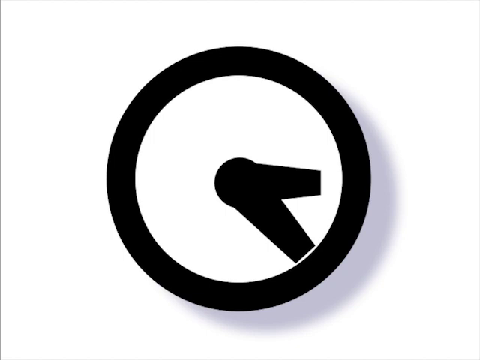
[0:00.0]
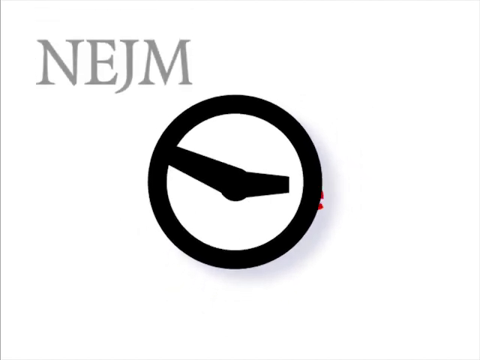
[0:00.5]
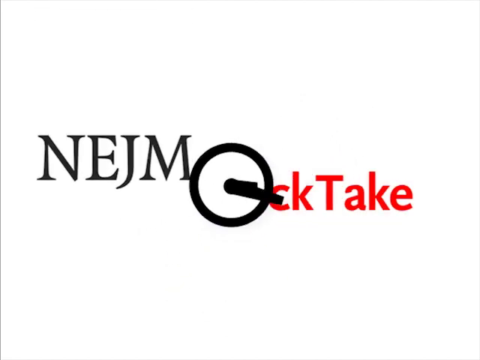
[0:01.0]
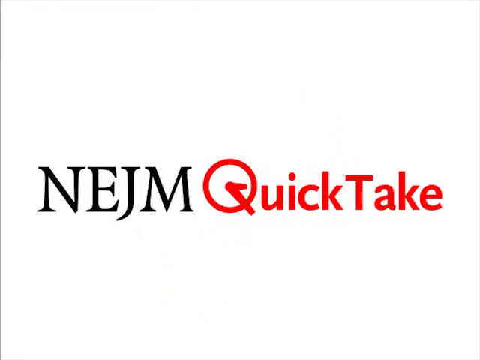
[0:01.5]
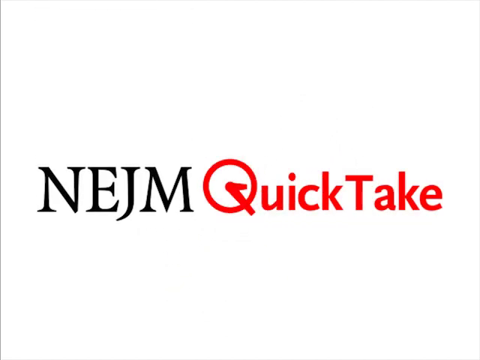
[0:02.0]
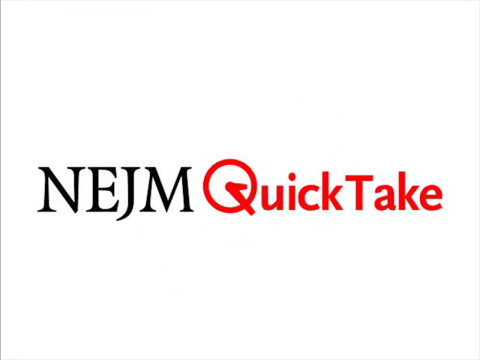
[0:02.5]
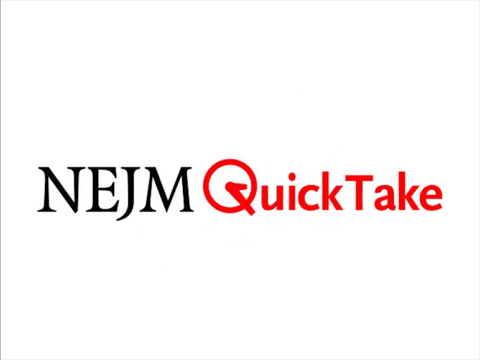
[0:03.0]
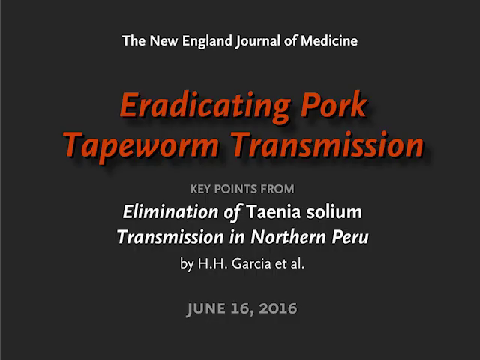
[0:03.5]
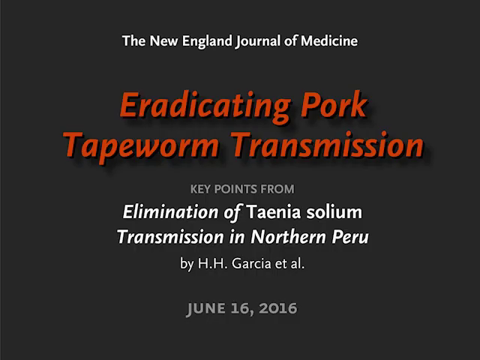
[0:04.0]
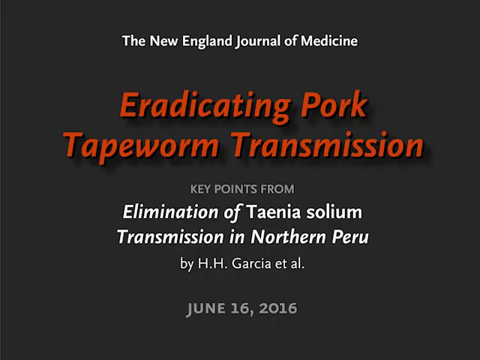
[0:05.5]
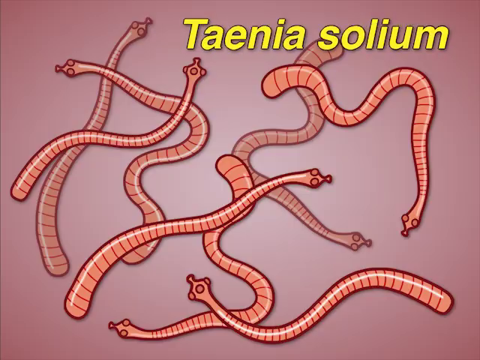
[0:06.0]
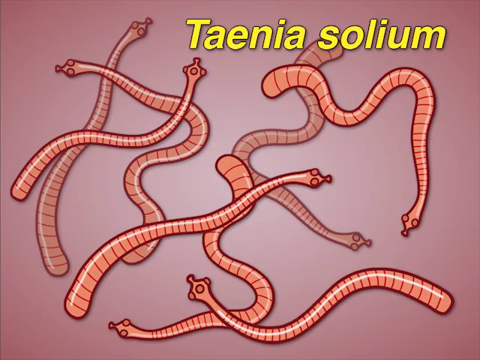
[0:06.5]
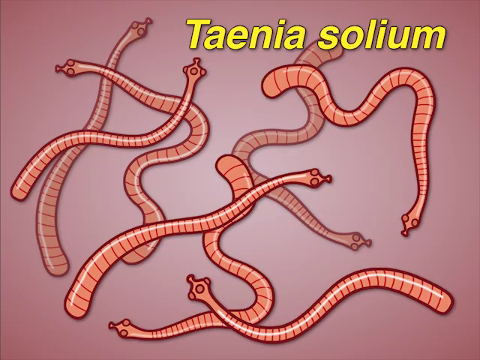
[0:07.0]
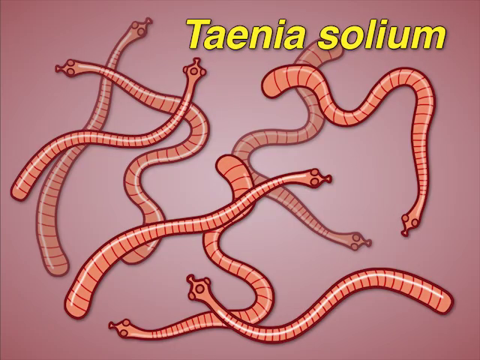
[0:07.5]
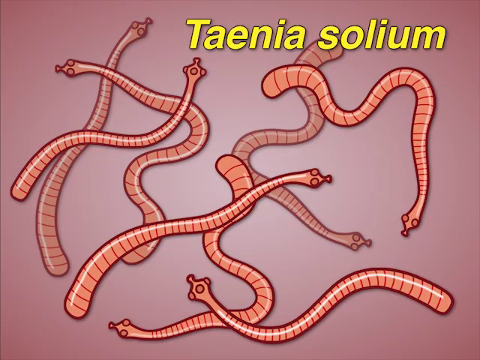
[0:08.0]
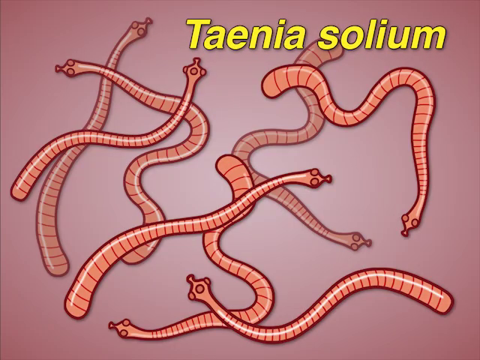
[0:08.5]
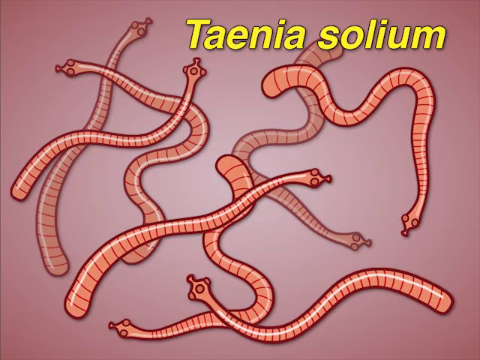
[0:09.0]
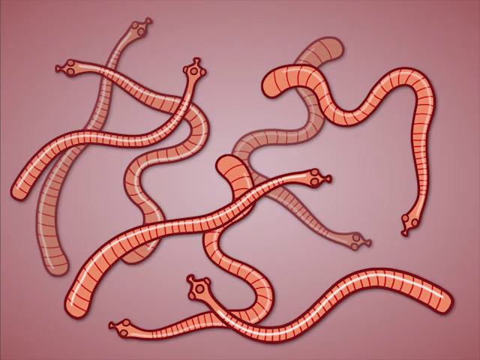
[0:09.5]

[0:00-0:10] An animated clock with its big hand ticking around turns into the letter Q. On a white background, the screen reads "NEJM quick take", with "NEJM" in black letters and "quick take" in coral red. The next screen has a grey background and reads, in white letters, "the New England Journal of Medicine" and "eradicating pork tapeworm transmission", followed by "Key points from elimination of Taenia solium transmission in northern Peru by HH Garcia et al." and the date "June 16th, 2016". Most of the writing is white or grey, but "eradicating pork tapeworm transmission" is orange. The following screen has a pink background with nine cartoon tapeworms, and at the top, in yellow lettering, it reads "Taenia solium".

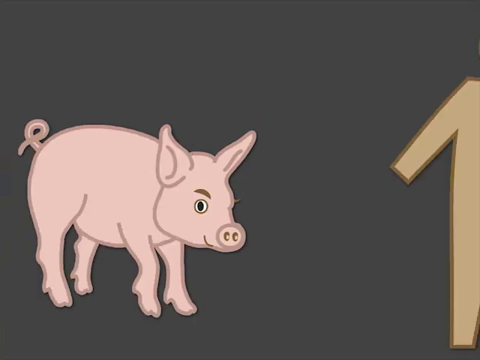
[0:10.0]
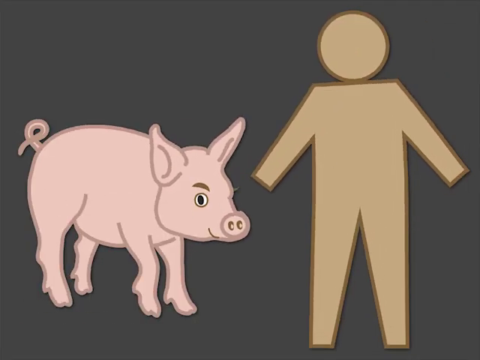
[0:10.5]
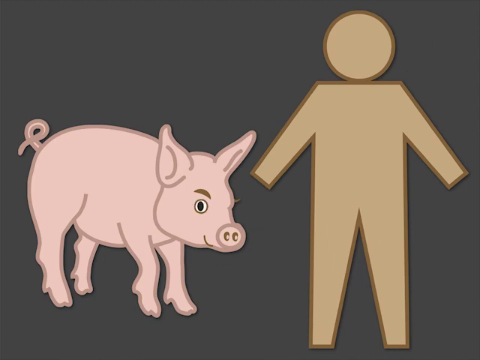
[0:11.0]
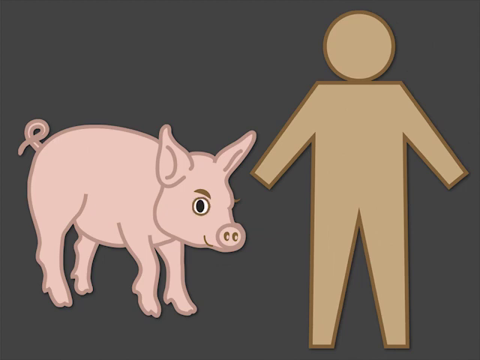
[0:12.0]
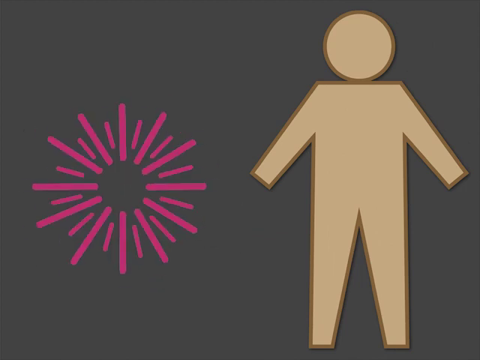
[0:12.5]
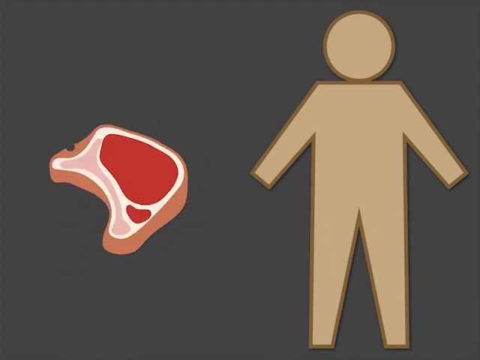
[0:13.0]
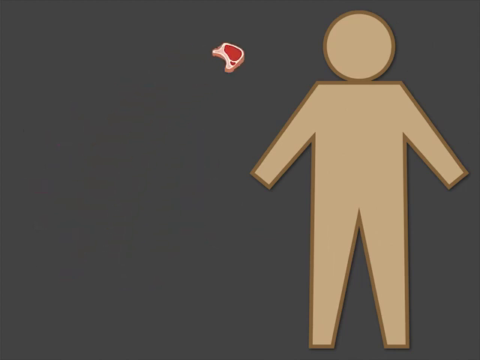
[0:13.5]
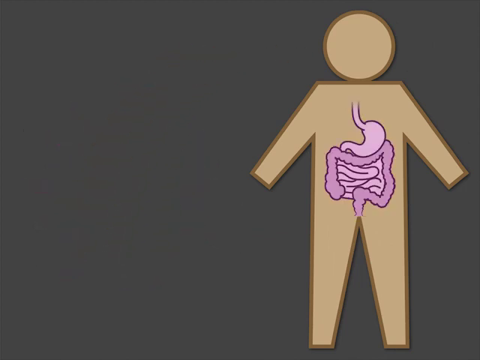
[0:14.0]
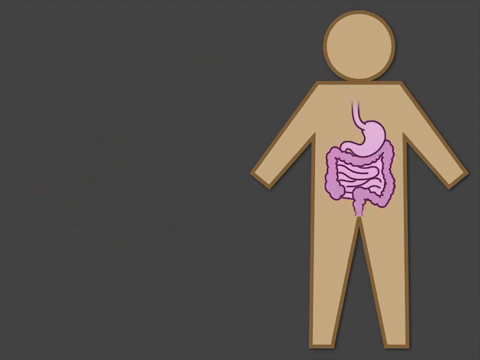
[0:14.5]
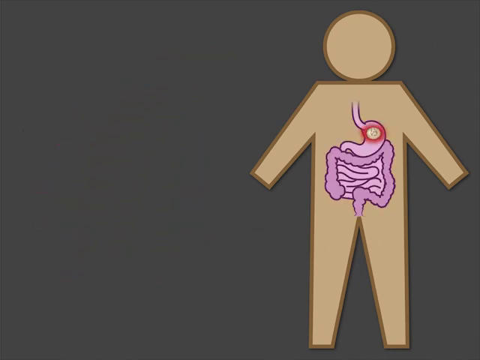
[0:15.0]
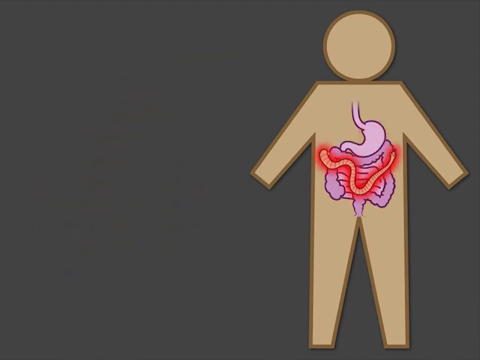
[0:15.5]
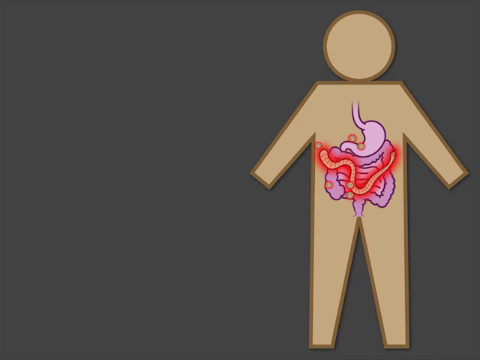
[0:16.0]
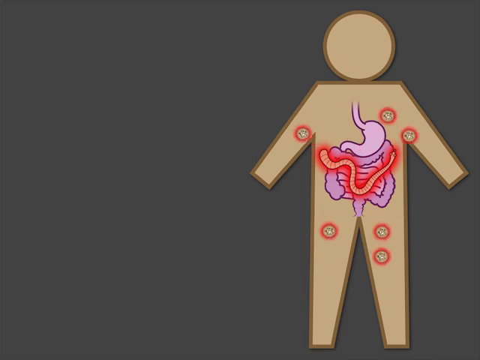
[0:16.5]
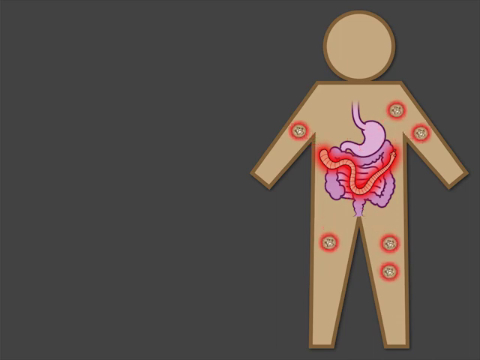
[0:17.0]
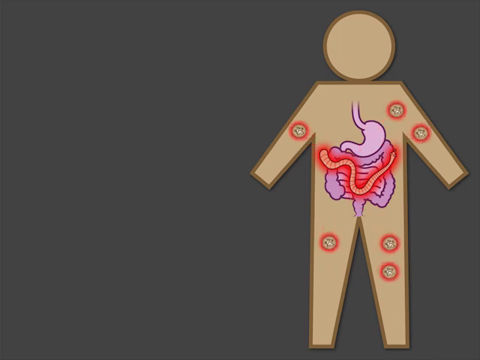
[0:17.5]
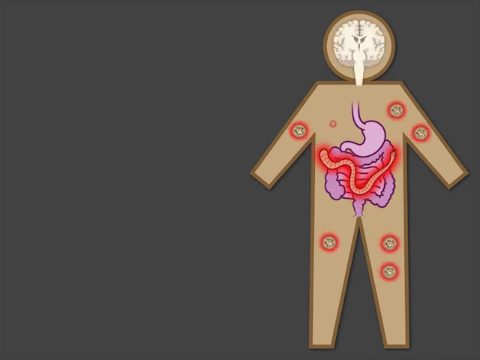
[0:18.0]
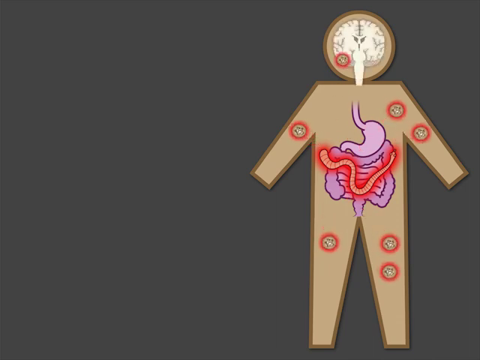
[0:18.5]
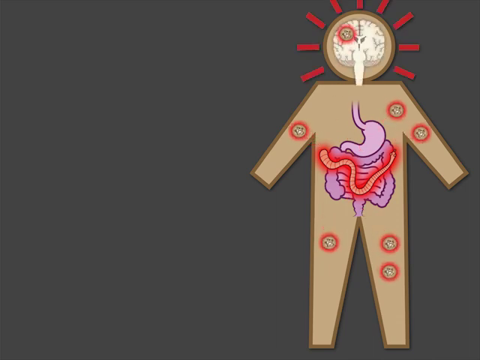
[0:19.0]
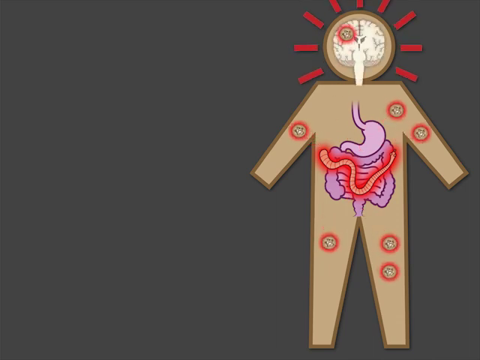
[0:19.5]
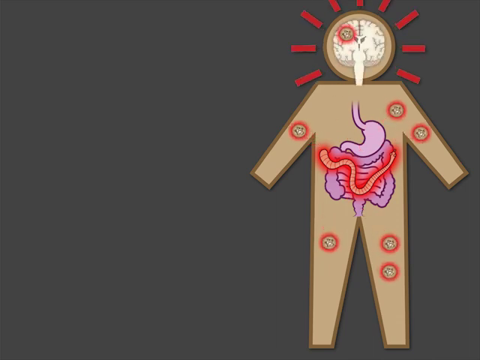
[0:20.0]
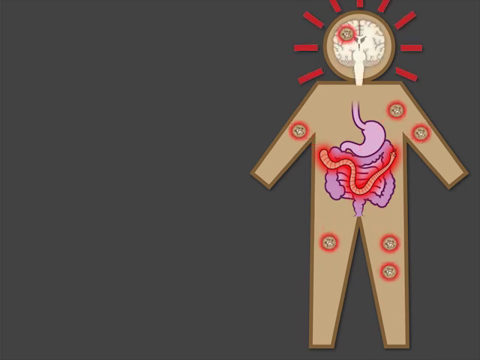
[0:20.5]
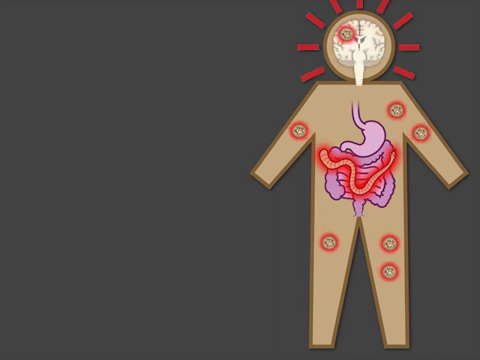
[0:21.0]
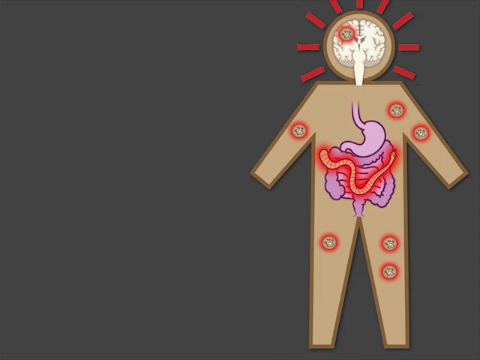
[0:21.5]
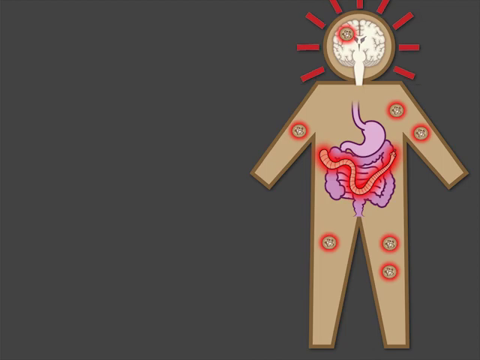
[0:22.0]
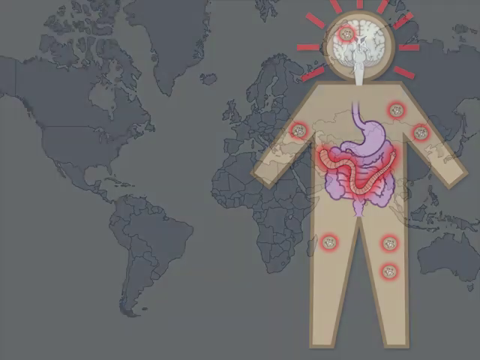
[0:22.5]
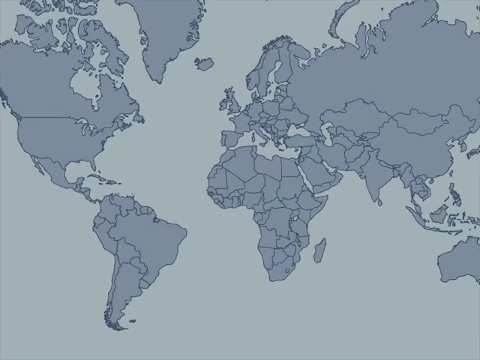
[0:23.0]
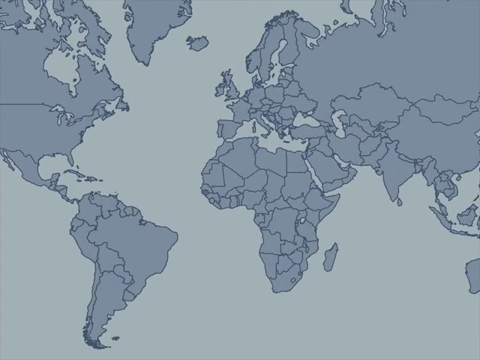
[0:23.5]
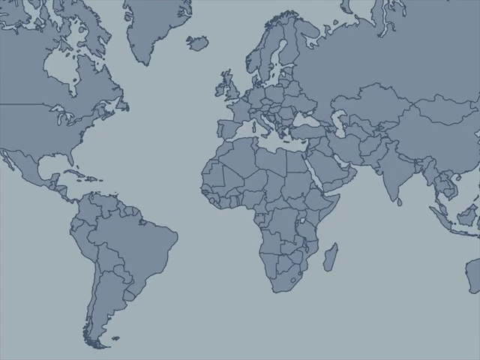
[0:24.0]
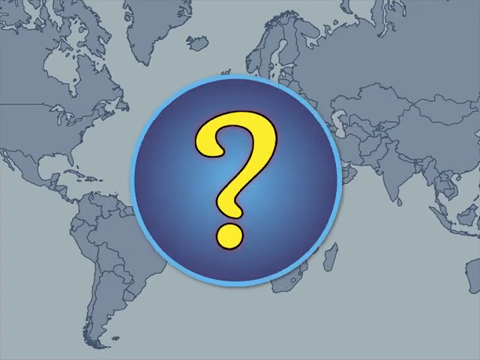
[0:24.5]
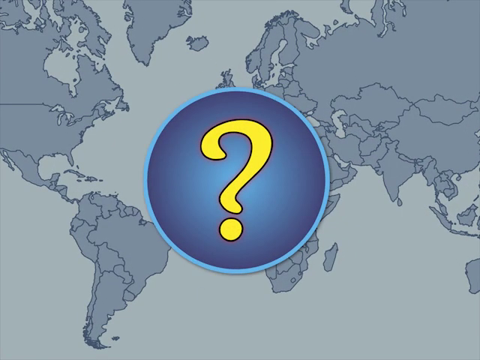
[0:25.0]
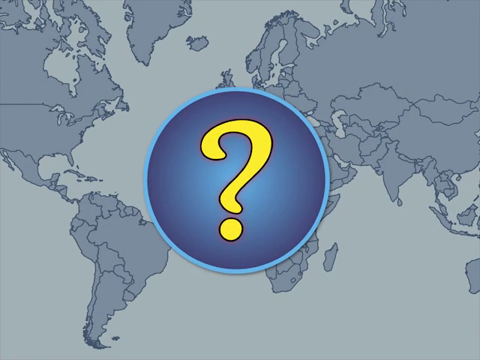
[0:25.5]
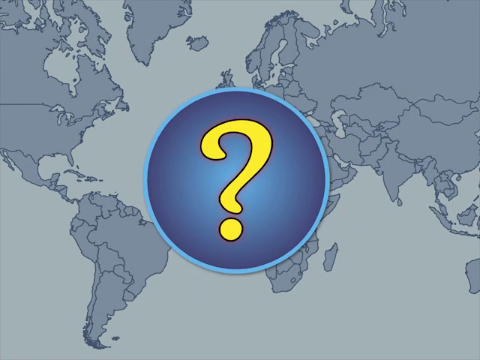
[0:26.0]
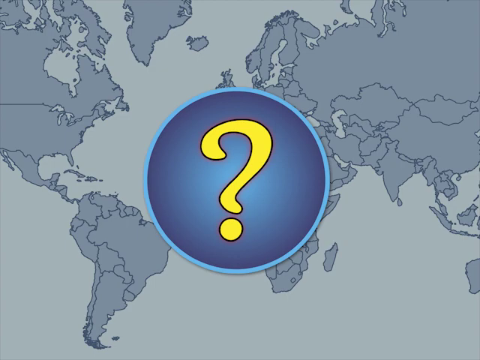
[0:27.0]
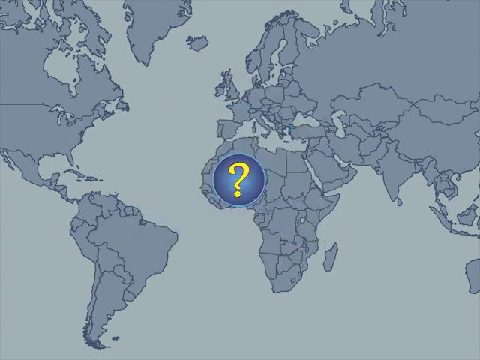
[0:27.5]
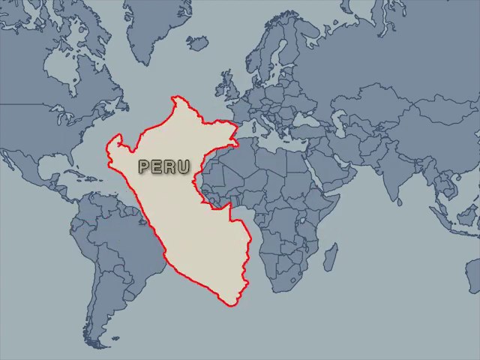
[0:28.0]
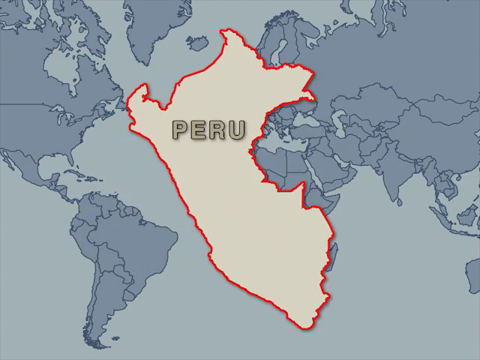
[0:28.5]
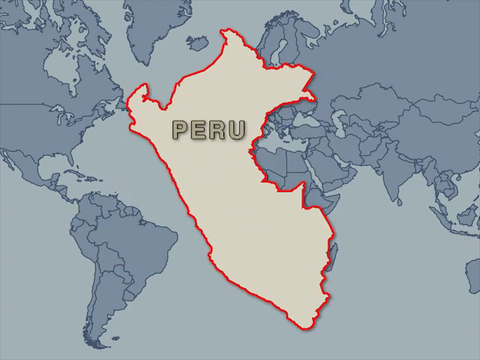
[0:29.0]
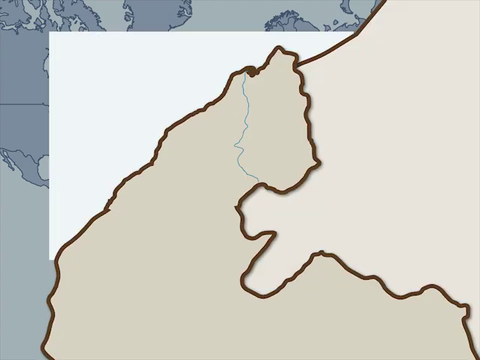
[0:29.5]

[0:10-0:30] A cartoon pig animation appears with a human stick figure stood beside the pig. The pig's eyes blink, then it disappears and turns into a joint of meat, presumably pork. The joint of meat disappears into the stick person's mouth, which illuminates the person's intestines and shows the meat travelling downwards into the digestive system, where it becomes an animated tapeworm inside the body. The tapeworm then spreads across the body, suggesting there are now several tapeworms, and one is visible in the person's brain area. Red warning symbols appear in an animation pumping around the person's head, seemingly indicating that this is particularly dangerous. The next screen shows a world map with Peru highlighted, and in the centre of the screen is a circle with a yellow question mark in the middle.